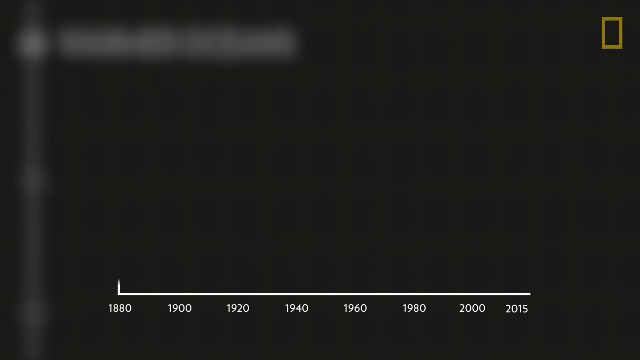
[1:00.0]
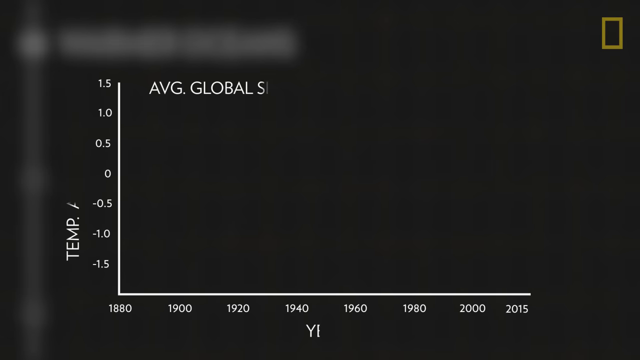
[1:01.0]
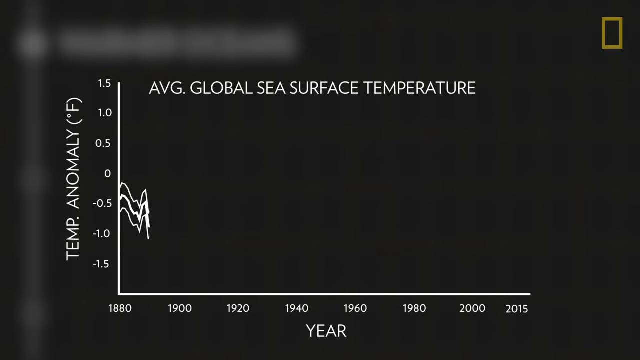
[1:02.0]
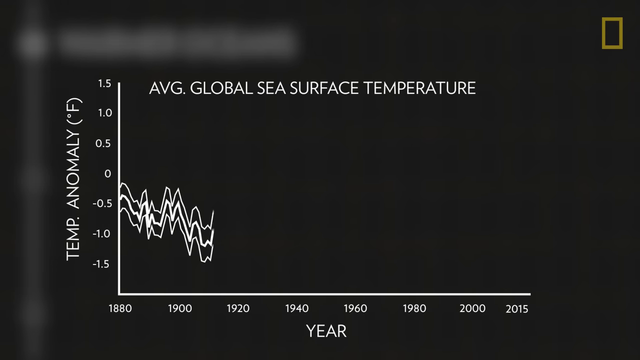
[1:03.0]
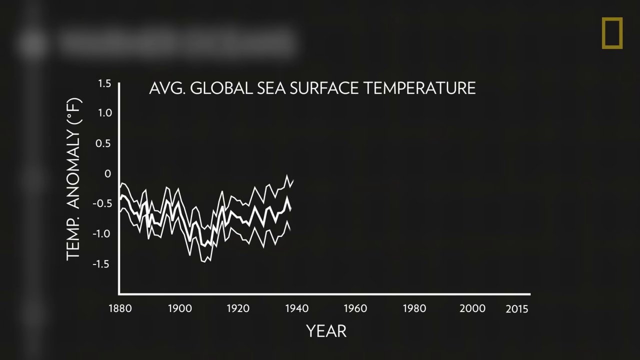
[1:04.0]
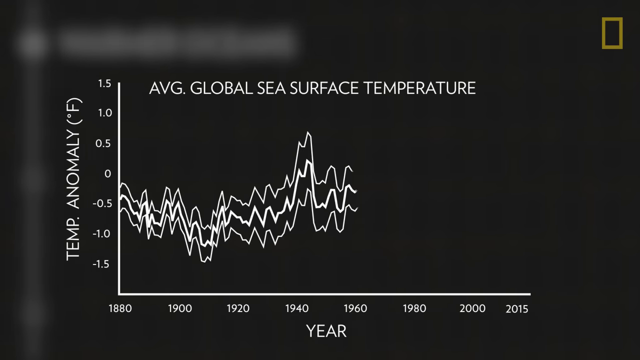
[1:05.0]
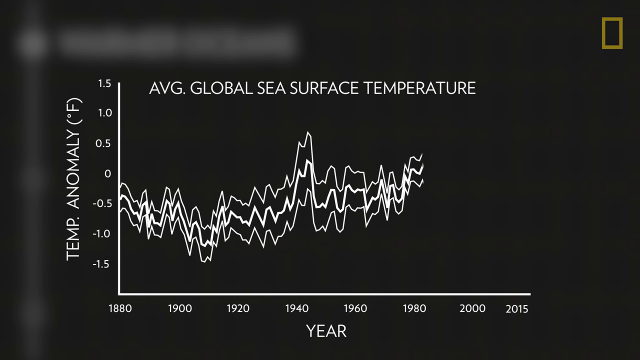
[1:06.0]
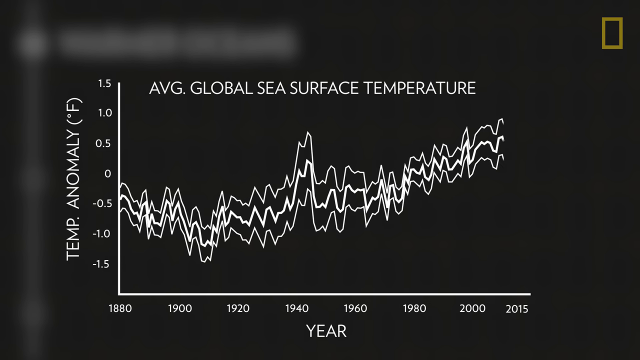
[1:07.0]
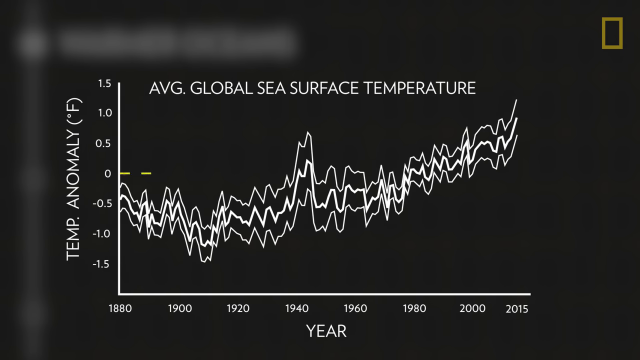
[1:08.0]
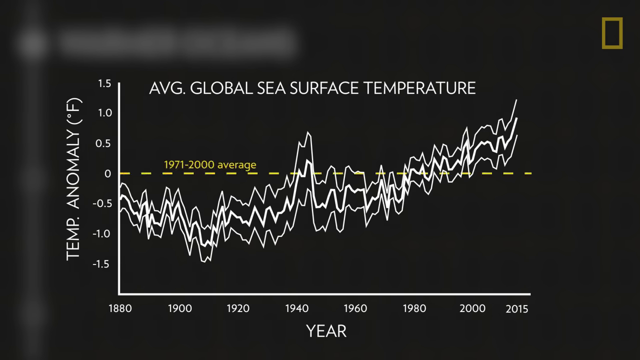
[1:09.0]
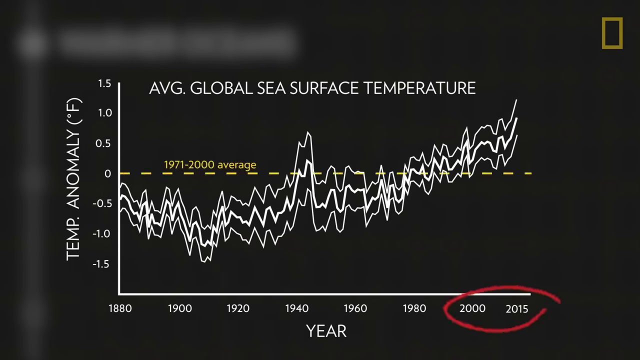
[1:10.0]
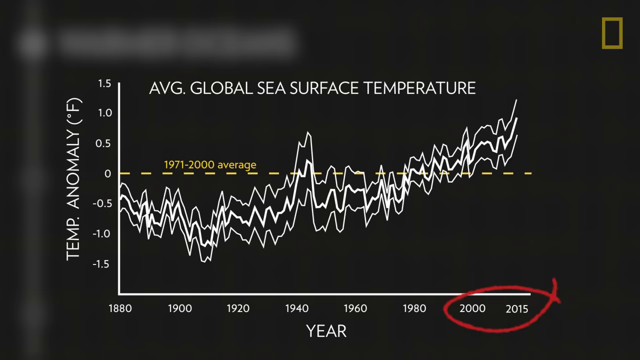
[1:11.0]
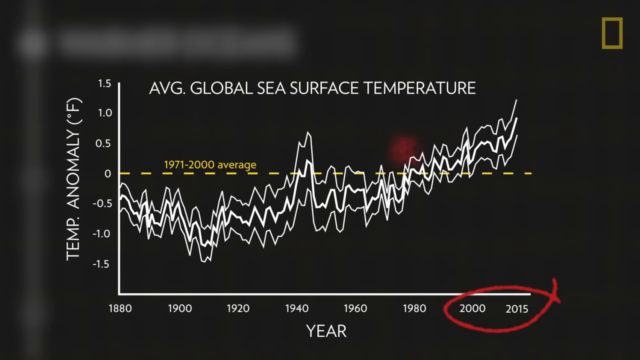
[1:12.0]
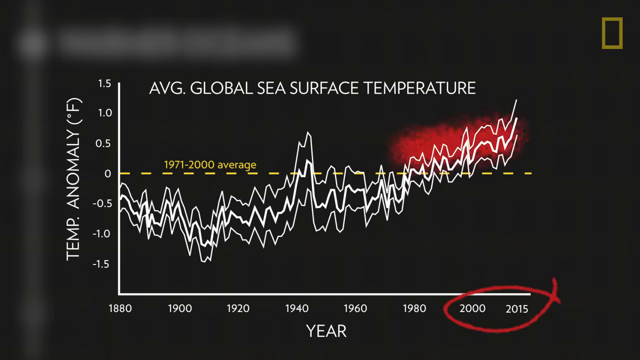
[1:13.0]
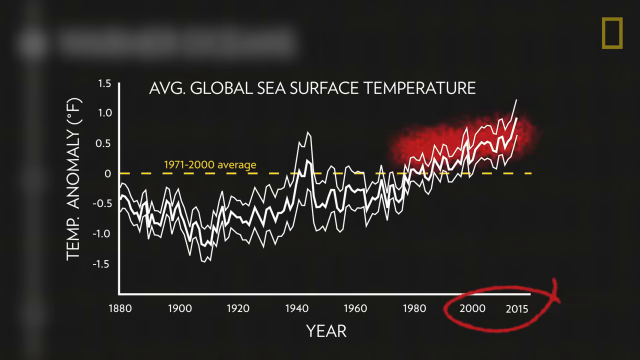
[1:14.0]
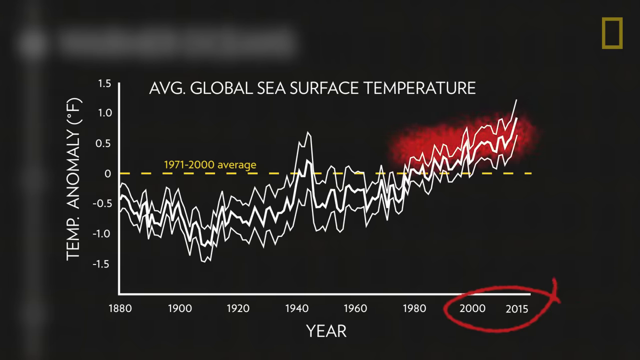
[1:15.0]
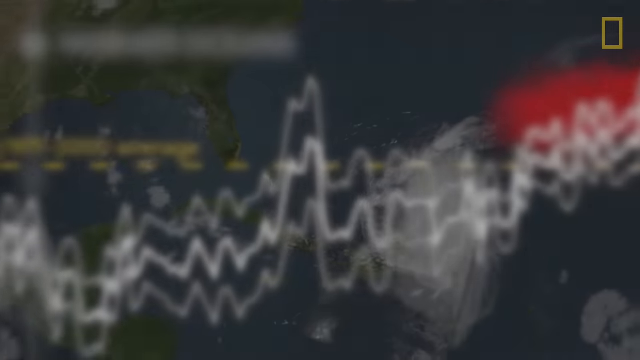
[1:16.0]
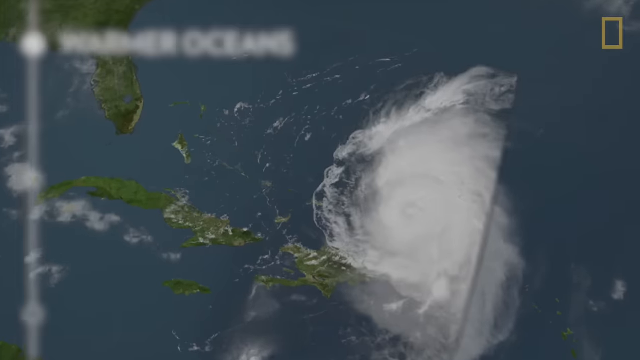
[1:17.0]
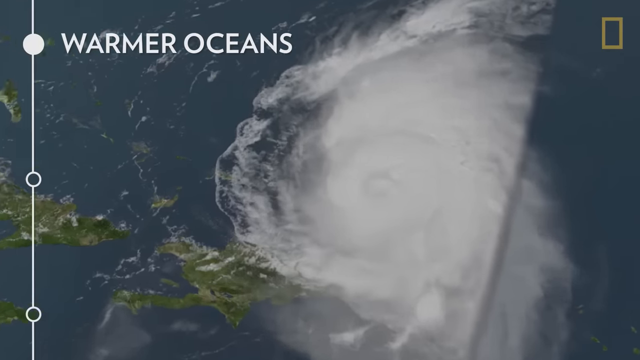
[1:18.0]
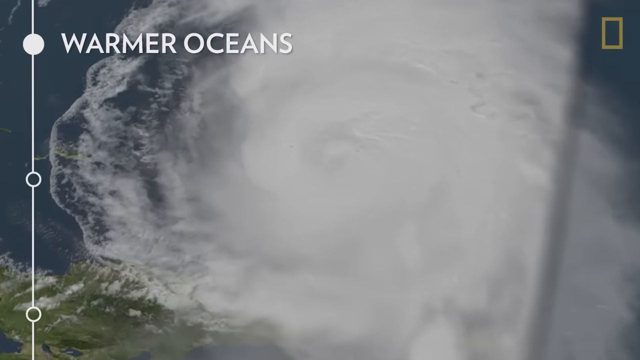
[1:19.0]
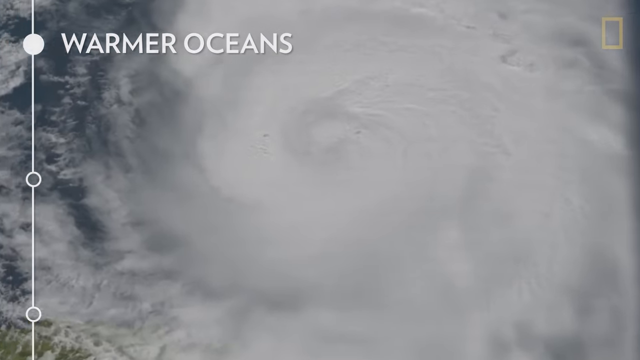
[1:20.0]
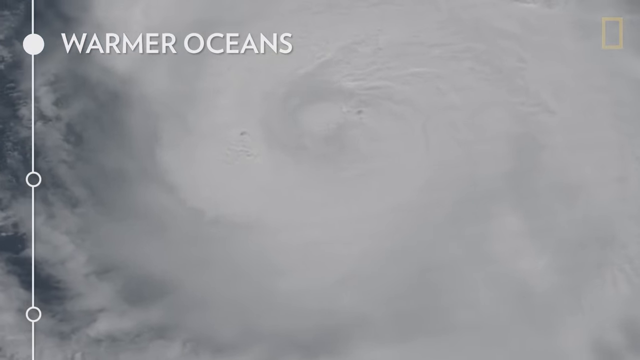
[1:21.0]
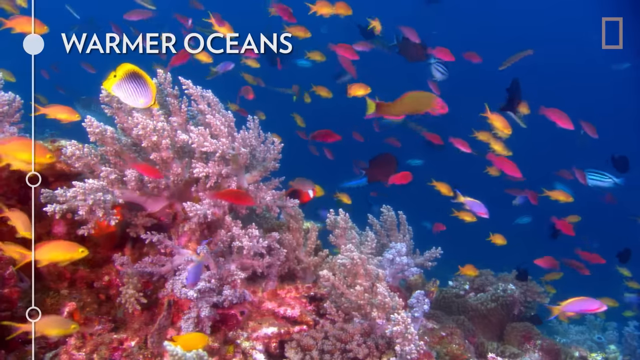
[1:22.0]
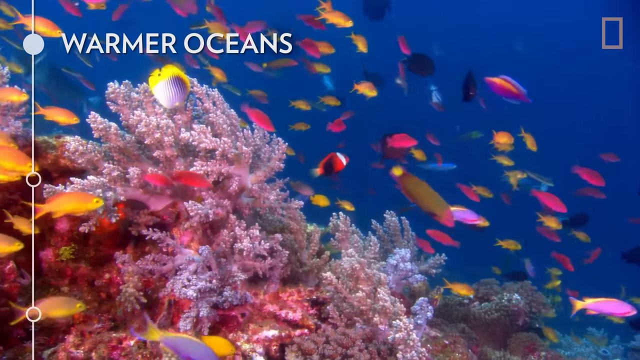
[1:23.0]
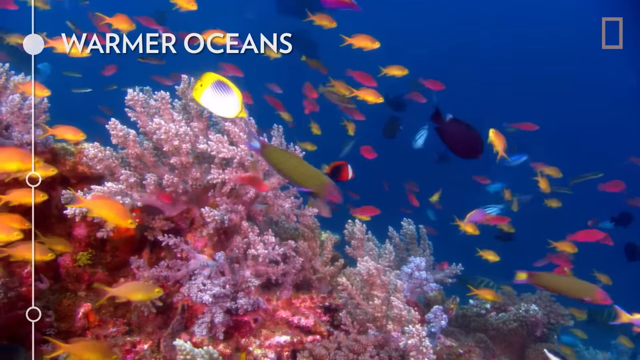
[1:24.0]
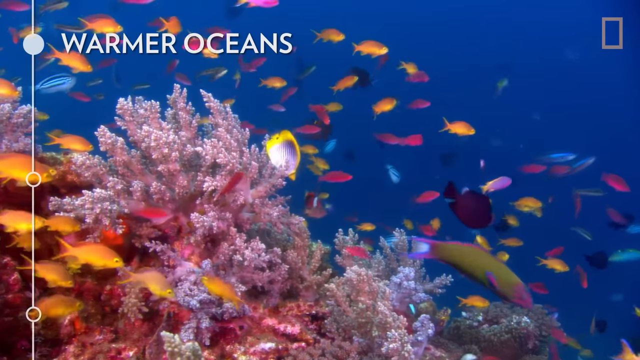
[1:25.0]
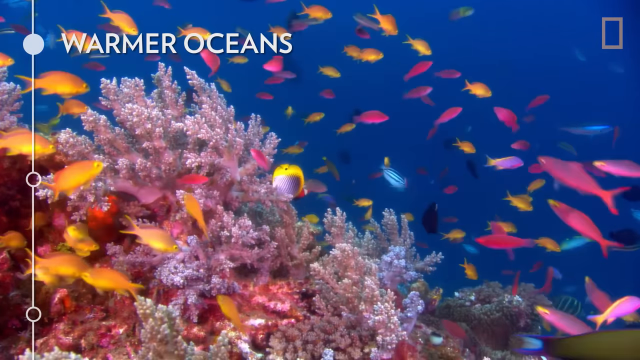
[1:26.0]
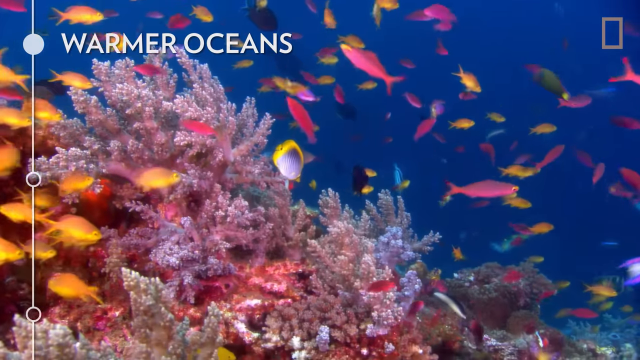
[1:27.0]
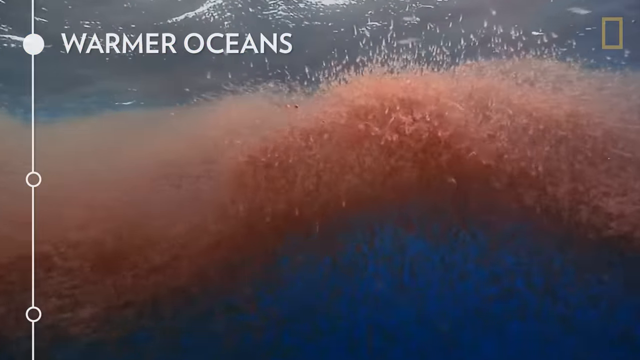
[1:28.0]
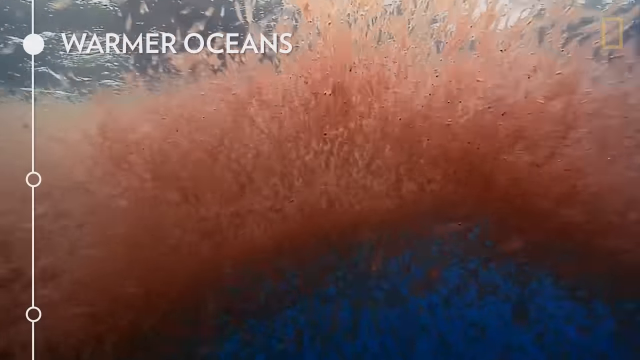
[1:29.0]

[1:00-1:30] On a black screen slightly wider than it is tall, what appears to be a graph loads in from bottom to top. The vertical axis runs from -1.5 to 1.5 and is labeled "temp anomaly in degrees Fahrenheit," while the horizontal axis is a solid bar at this point. A title then appears along the top in white text: "average global sea surface temperature." Three lines run parallel to one another, probably representing different years; they go up and down but gradually increase from left to right. The bottom of the graph then fills in with dates, which look like they run from 1880 to 2020.